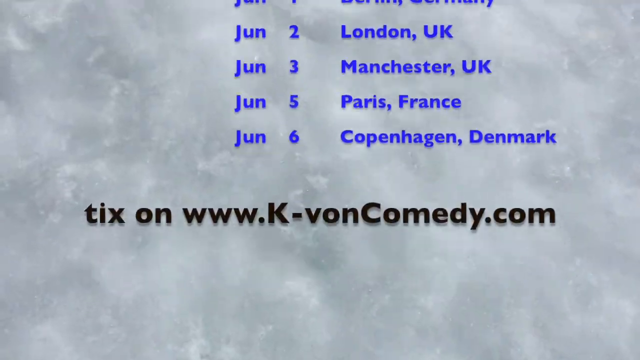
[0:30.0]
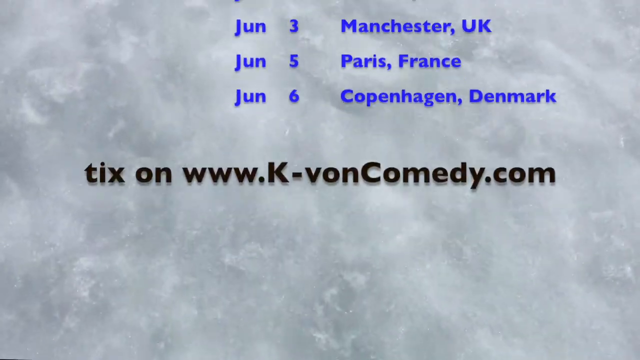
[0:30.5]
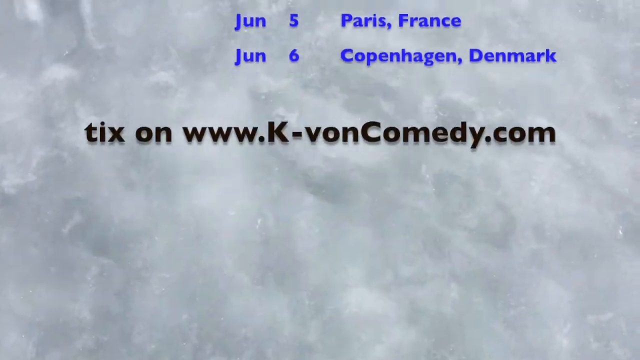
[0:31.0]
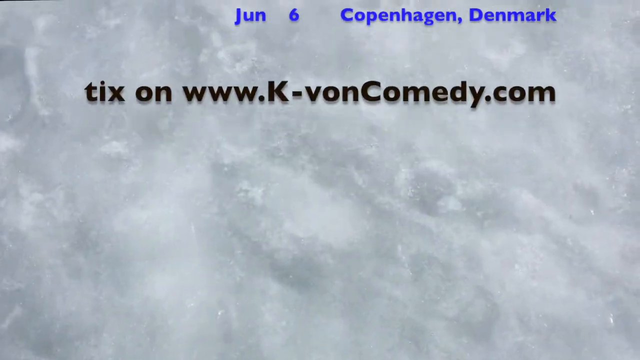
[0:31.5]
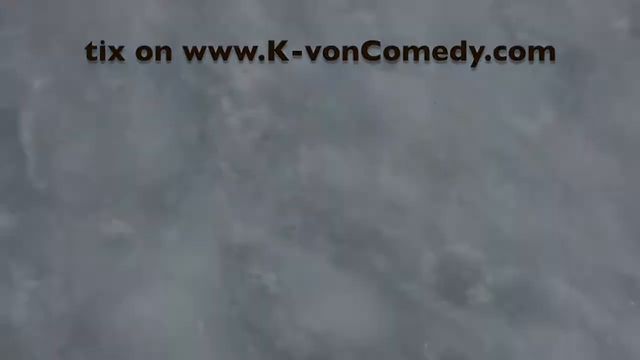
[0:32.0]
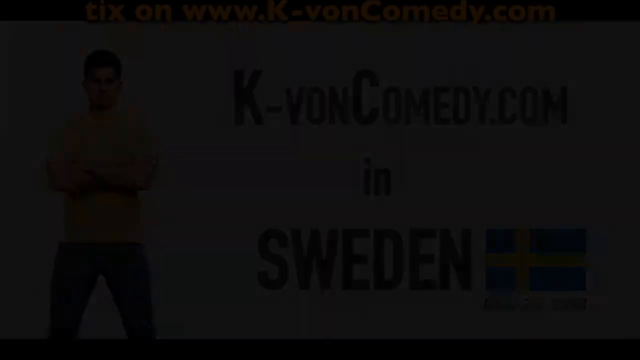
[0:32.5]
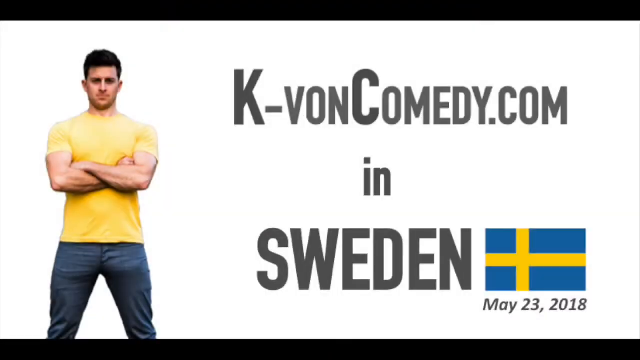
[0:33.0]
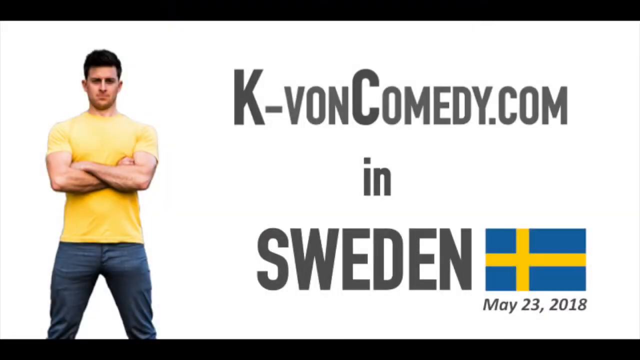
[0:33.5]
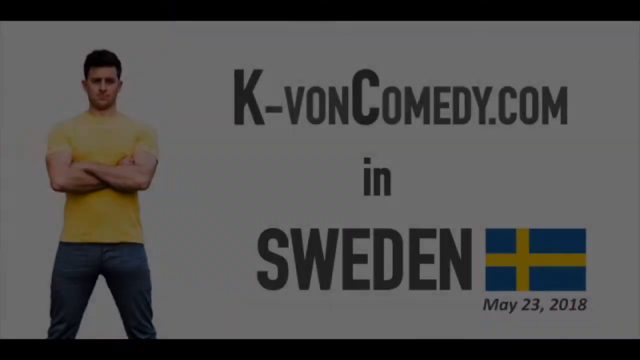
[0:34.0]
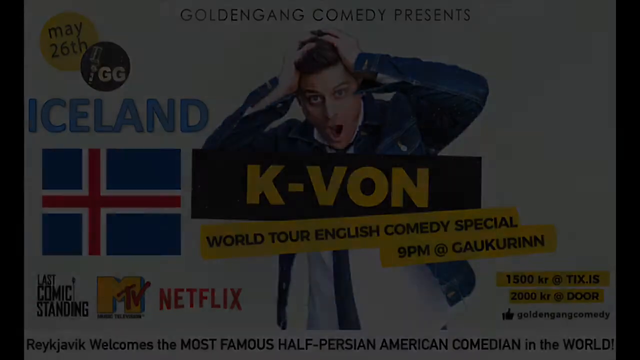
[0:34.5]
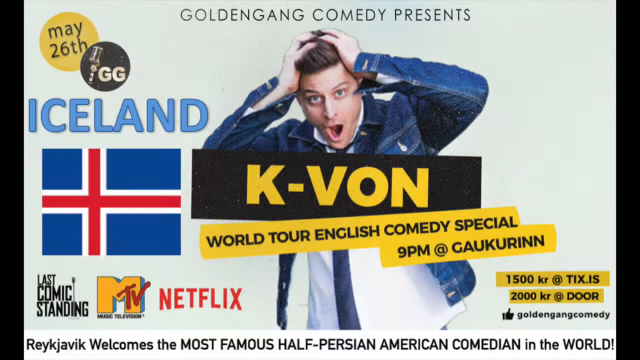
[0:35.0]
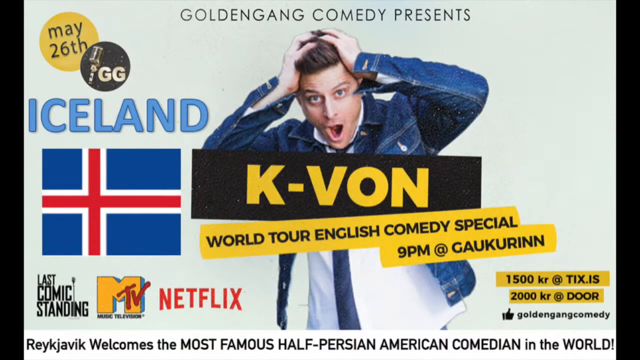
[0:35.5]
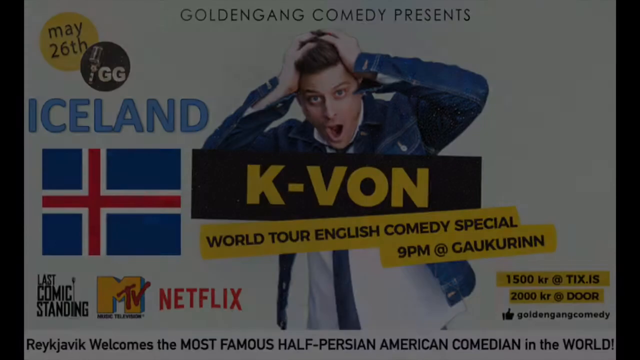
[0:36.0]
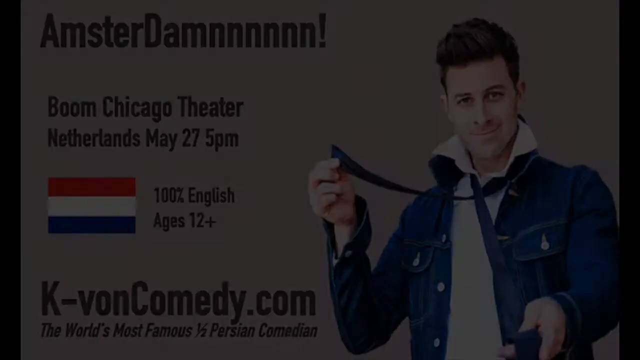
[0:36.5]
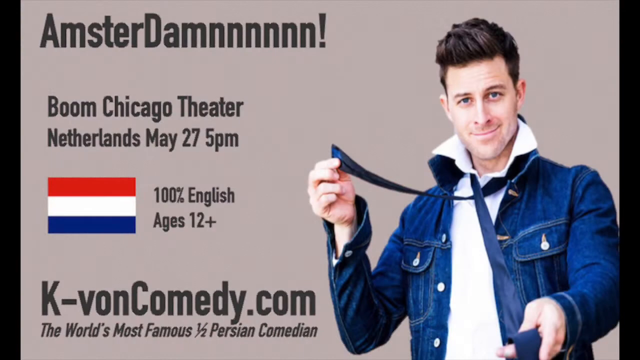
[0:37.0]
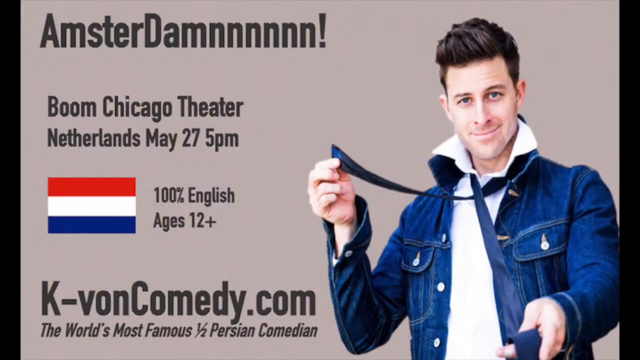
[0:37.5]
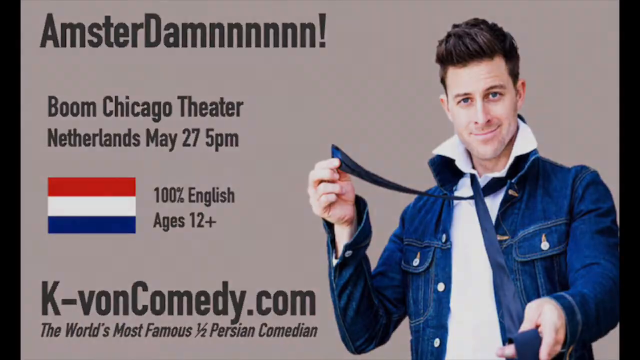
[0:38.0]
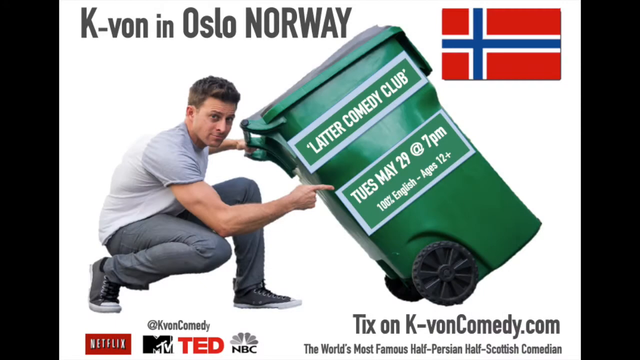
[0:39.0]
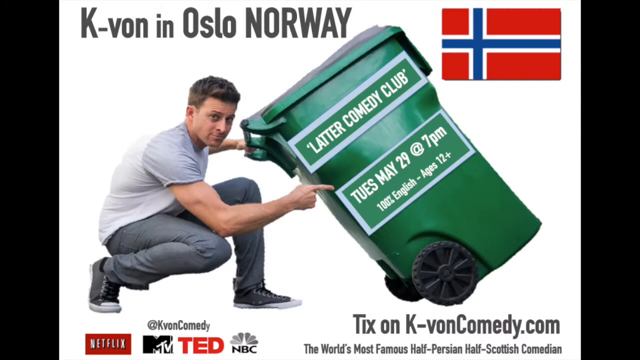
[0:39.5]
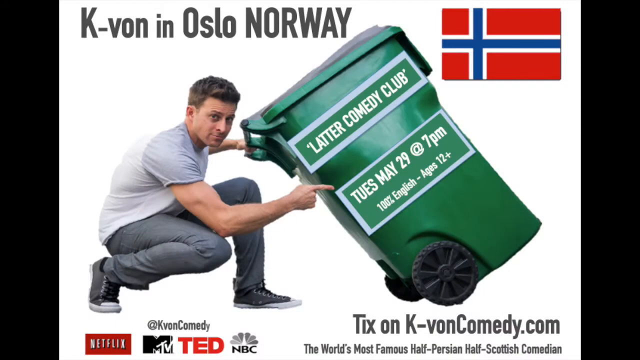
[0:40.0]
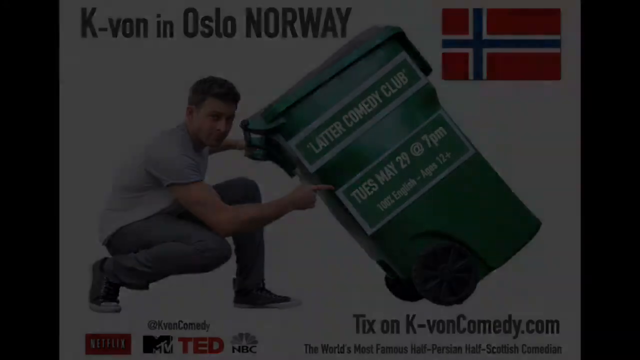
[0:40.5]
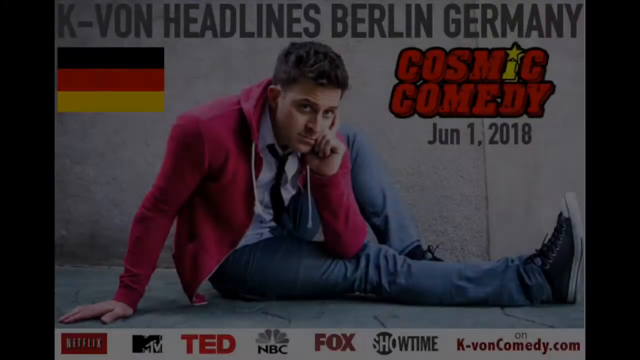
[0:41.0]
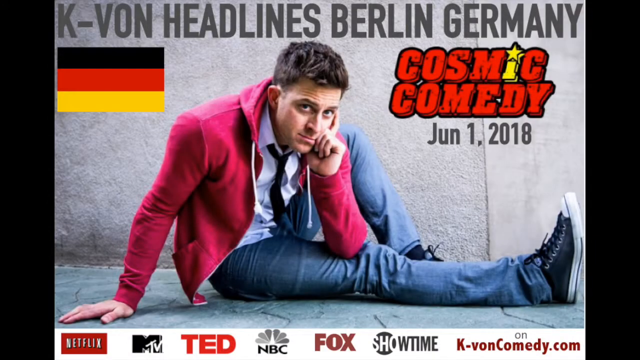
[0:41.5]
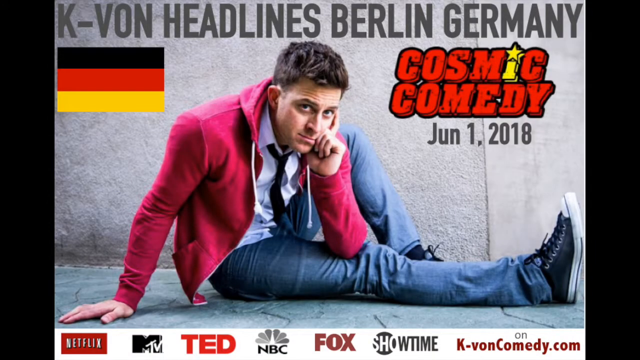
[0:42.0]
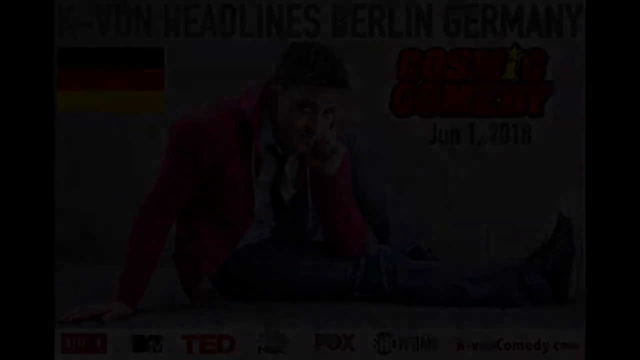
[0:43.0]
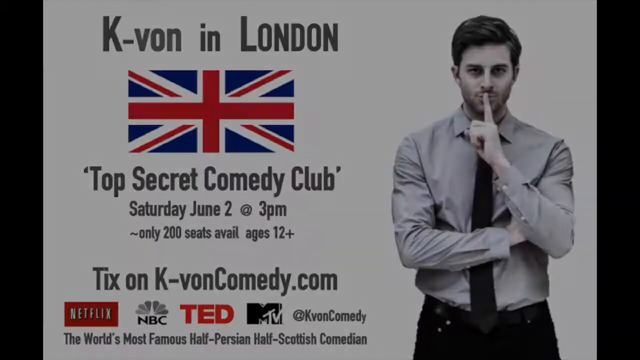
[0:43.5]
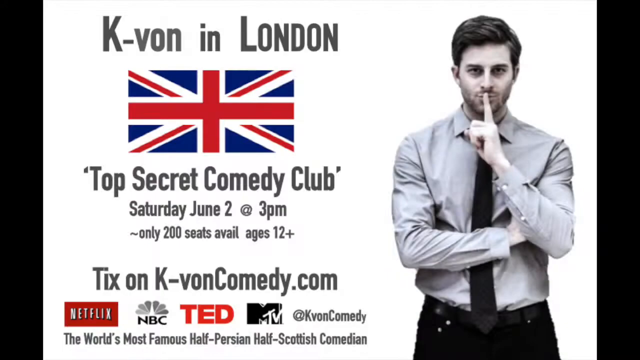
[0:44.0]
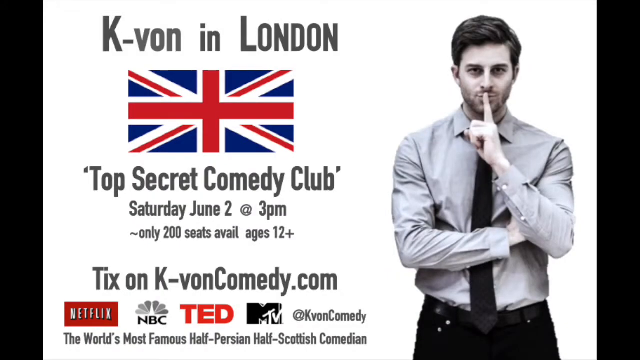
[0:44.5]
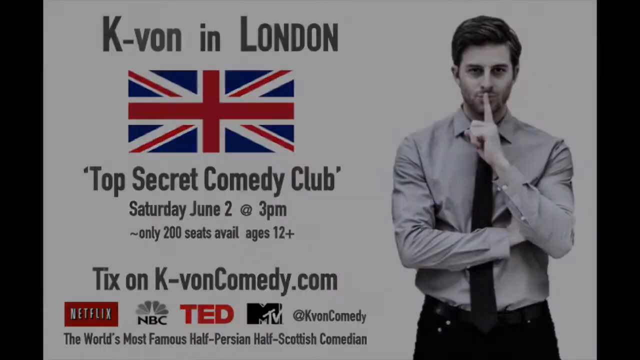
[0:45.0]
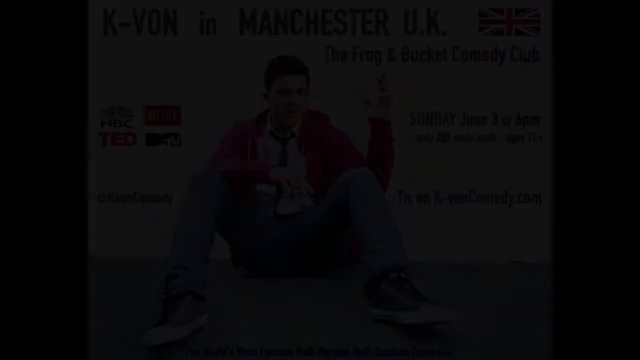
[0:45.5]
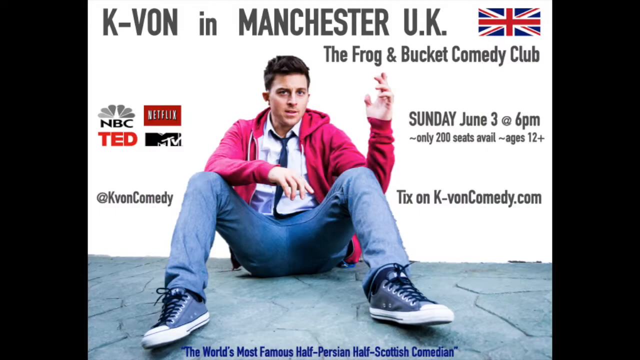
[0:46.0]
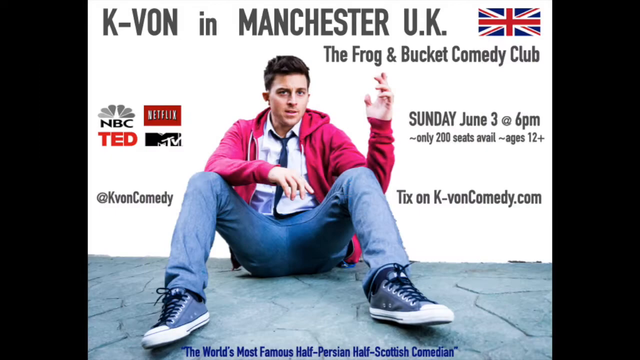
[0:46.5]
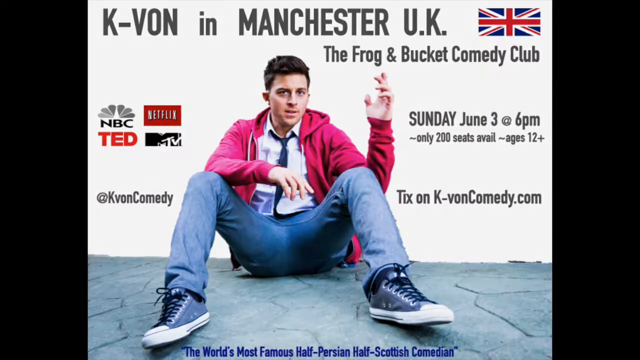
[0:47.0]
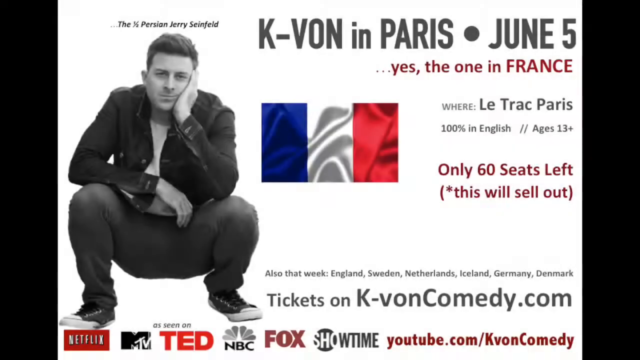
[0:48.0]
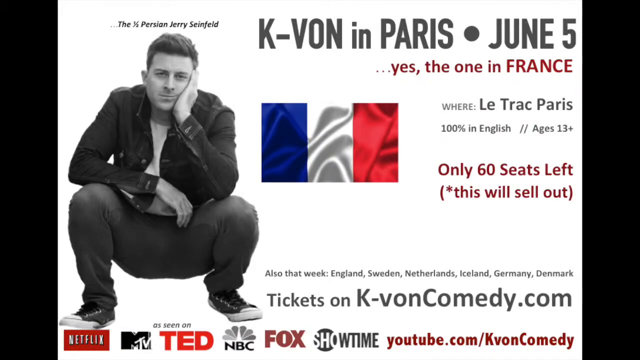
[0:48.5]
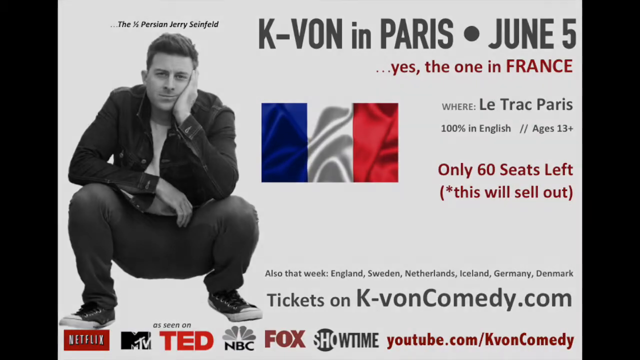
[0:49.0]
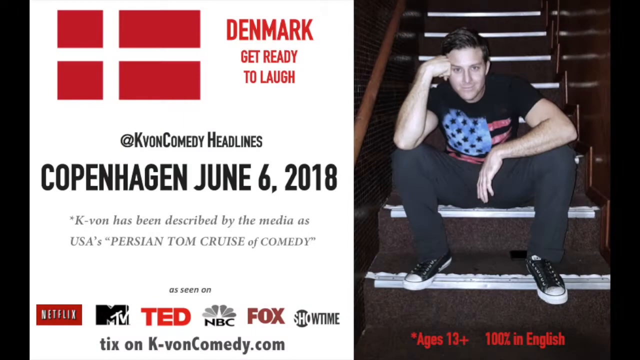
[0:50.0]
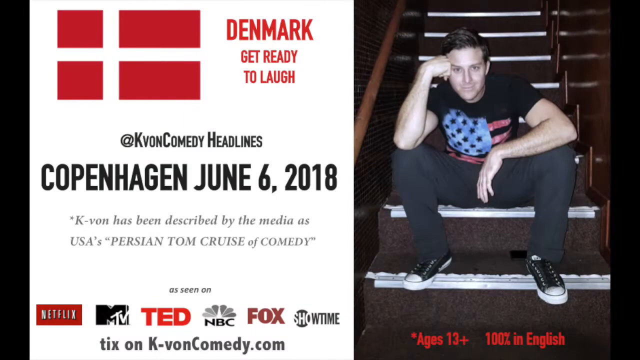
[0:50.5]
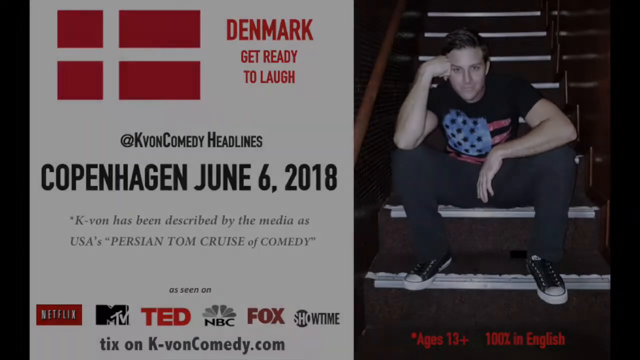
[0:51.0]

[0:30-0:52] Text scrolls from bottom to top, listing dates alongside different cities. A website, "www.k-voncomedy.com," then appears, with a lot of snow in the background. The video cuts to a person standing with their arms folded in front of their stomach, wearing a yellow shirt and grey pants and staring directly at the camera. Text reads "k-voncomedy.com" and "Sweden," with the Swedish flag, and underneath it reads "May 23, 2018." The same person continues to appear in different outfits, kind of promoting the different places they will be going, with flyers for comedy shows in Iceland, Amsterdam, Norway, and Germany.